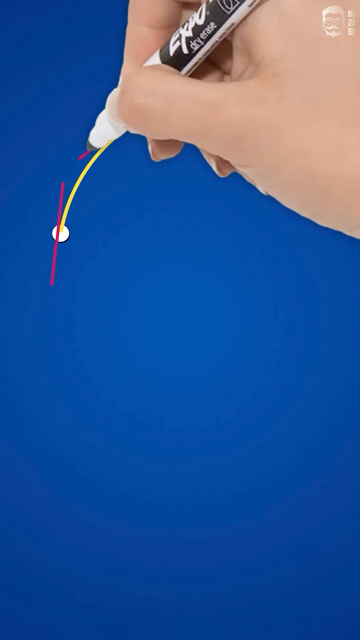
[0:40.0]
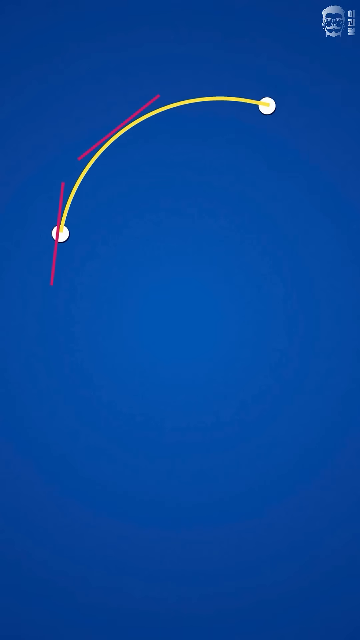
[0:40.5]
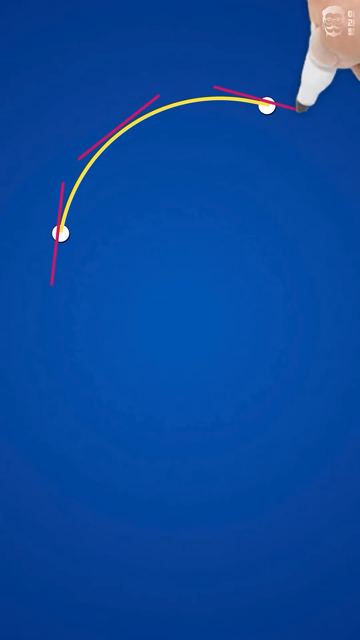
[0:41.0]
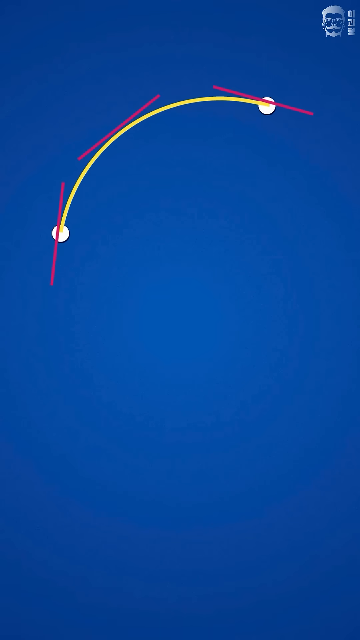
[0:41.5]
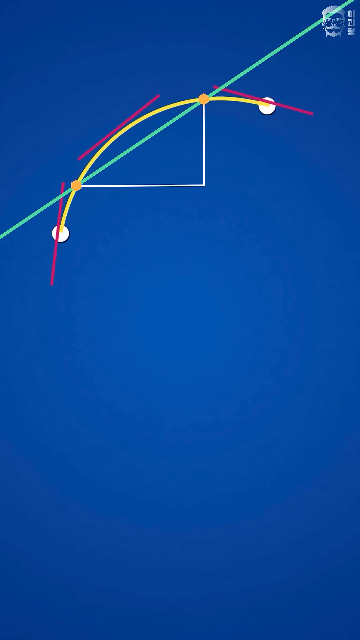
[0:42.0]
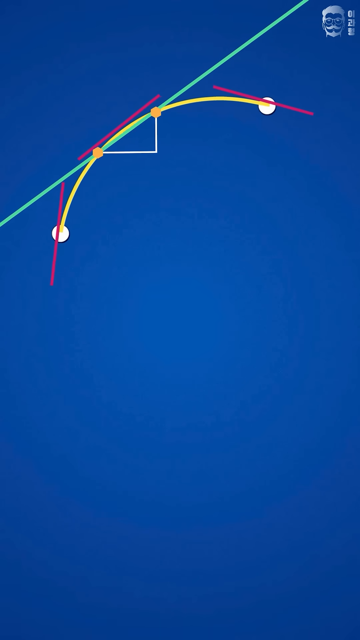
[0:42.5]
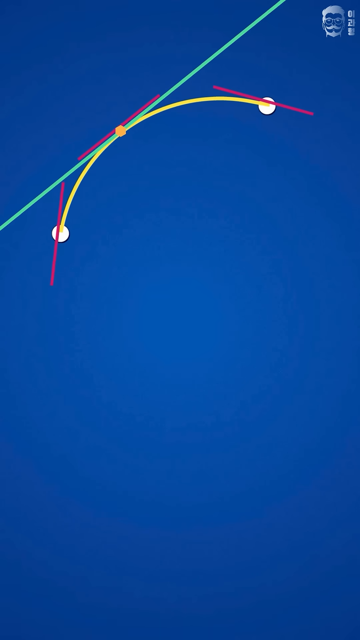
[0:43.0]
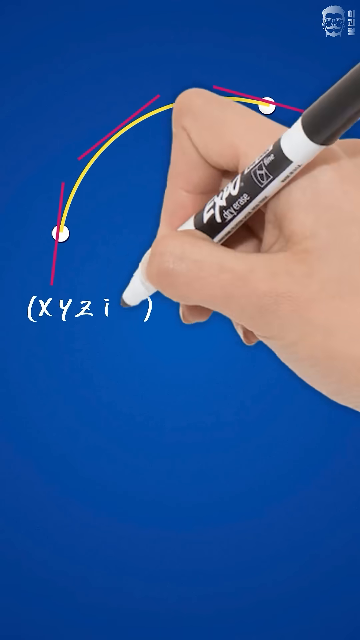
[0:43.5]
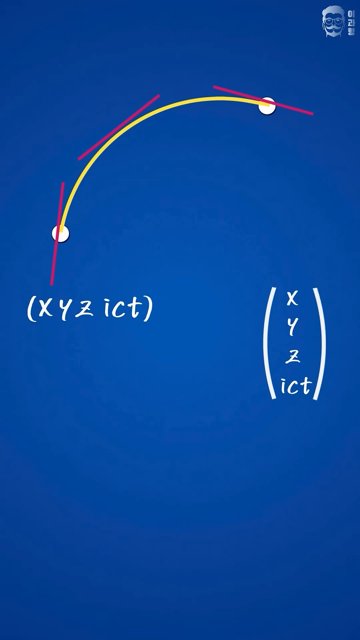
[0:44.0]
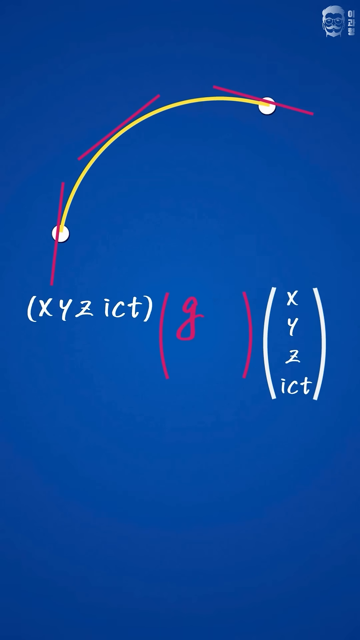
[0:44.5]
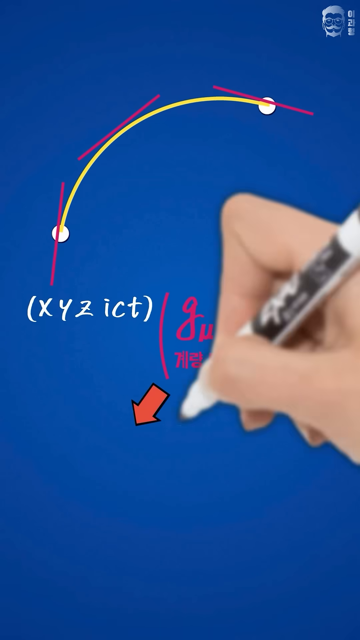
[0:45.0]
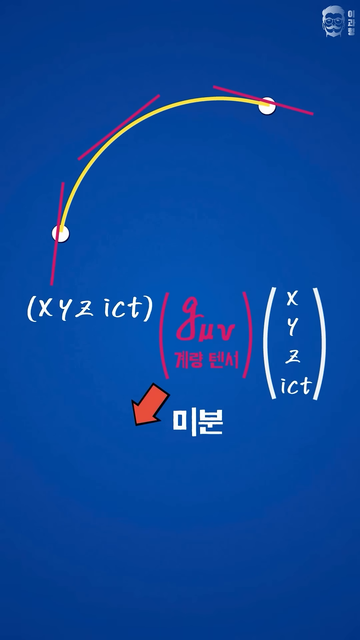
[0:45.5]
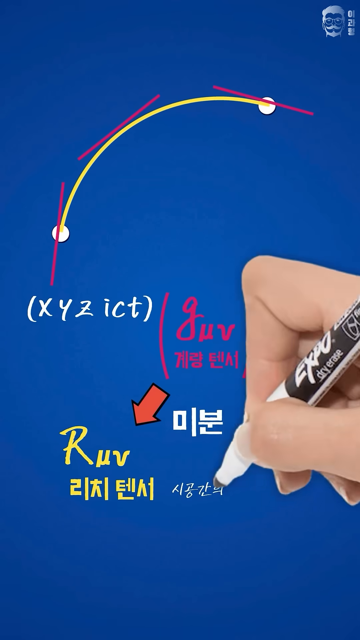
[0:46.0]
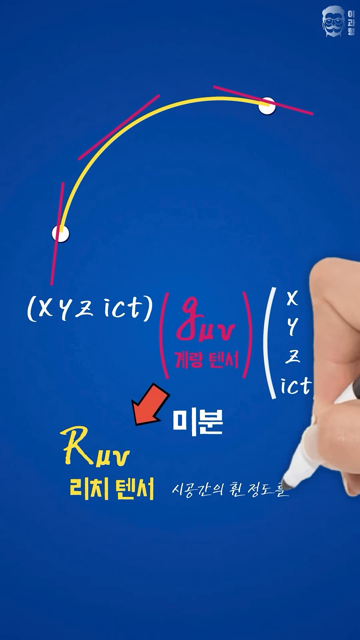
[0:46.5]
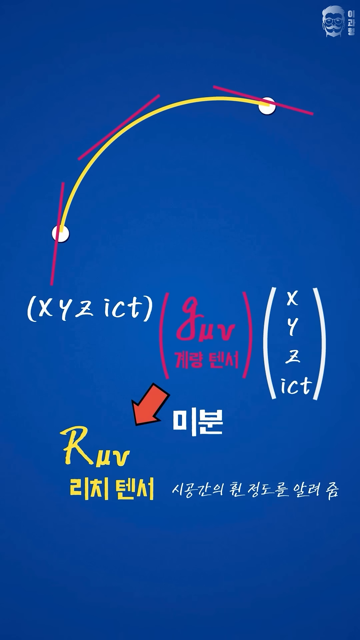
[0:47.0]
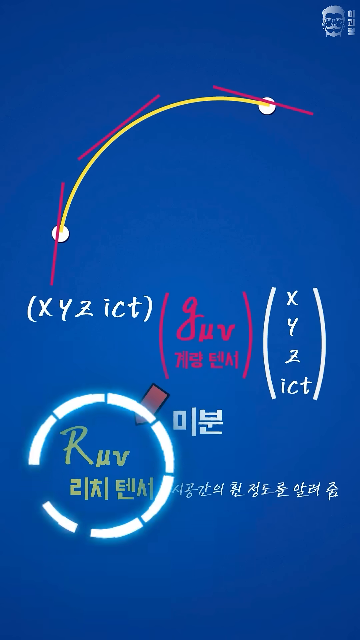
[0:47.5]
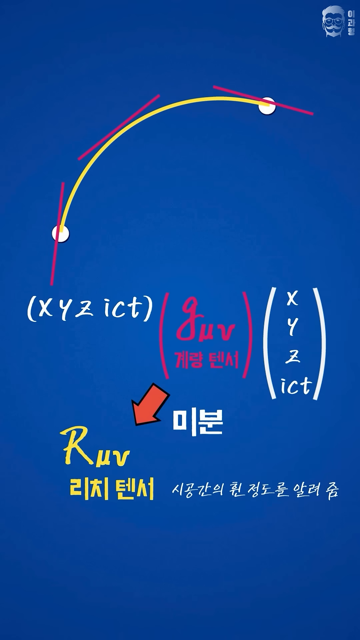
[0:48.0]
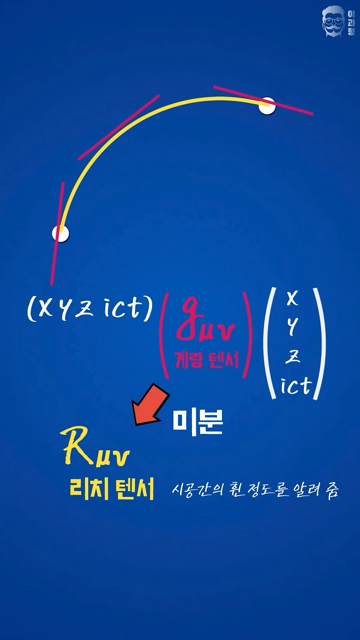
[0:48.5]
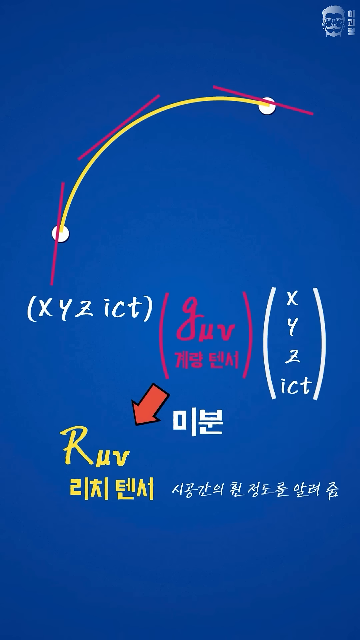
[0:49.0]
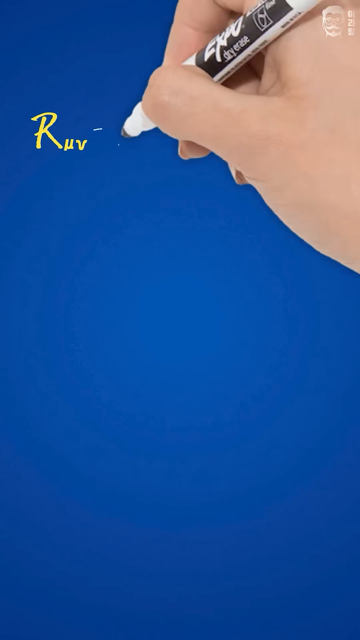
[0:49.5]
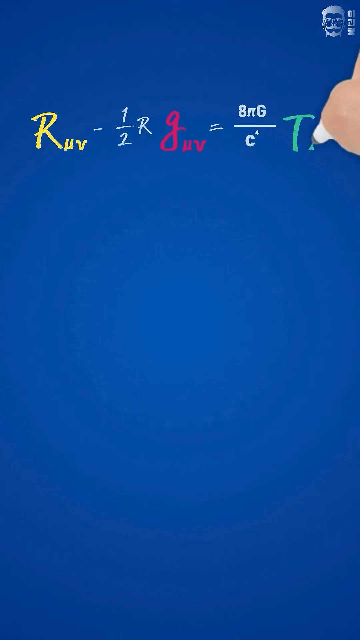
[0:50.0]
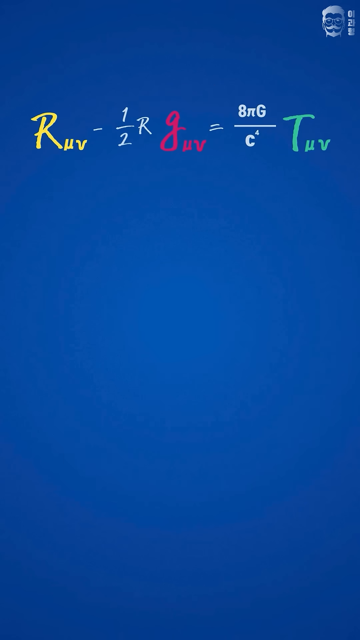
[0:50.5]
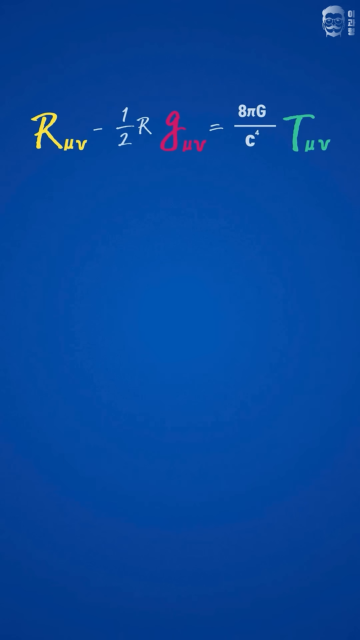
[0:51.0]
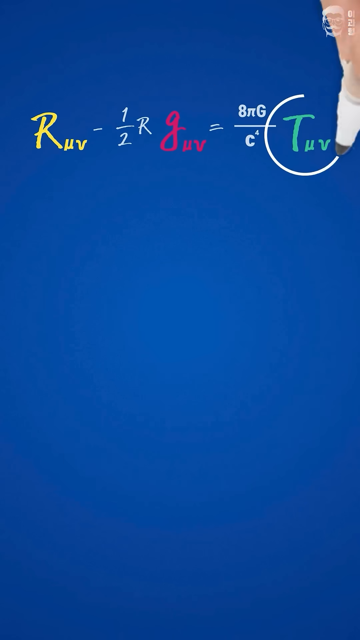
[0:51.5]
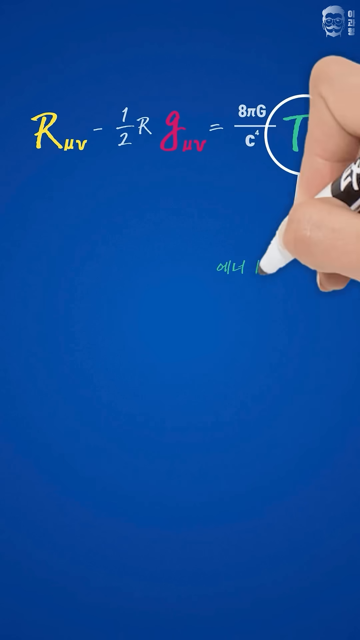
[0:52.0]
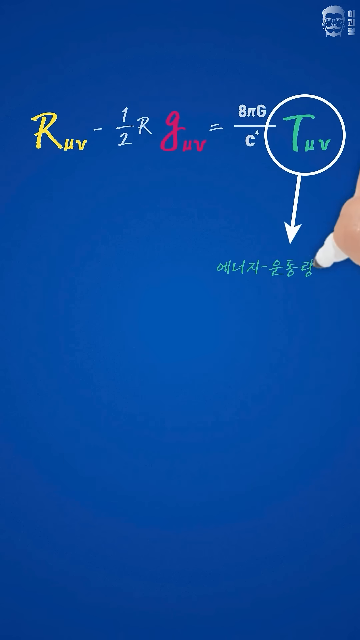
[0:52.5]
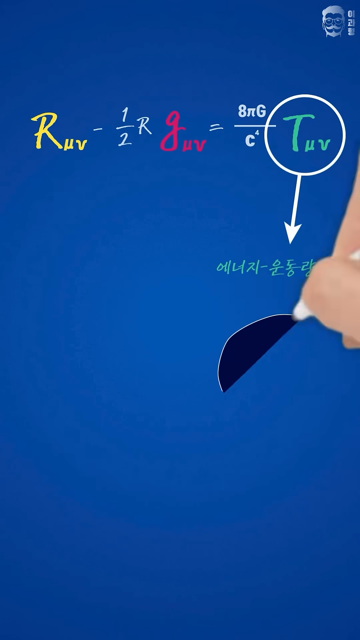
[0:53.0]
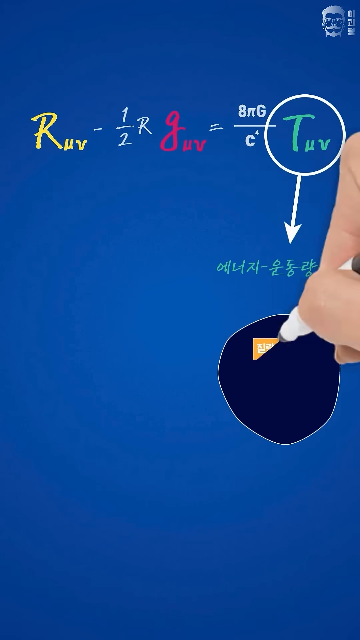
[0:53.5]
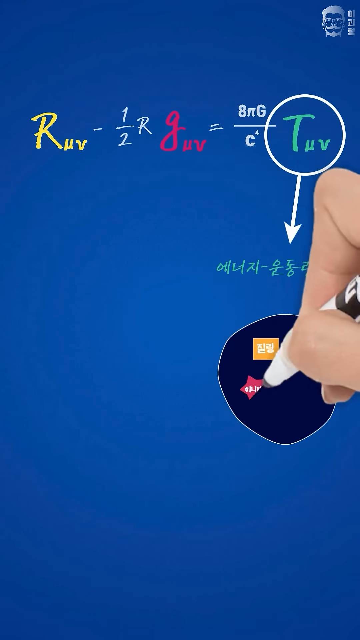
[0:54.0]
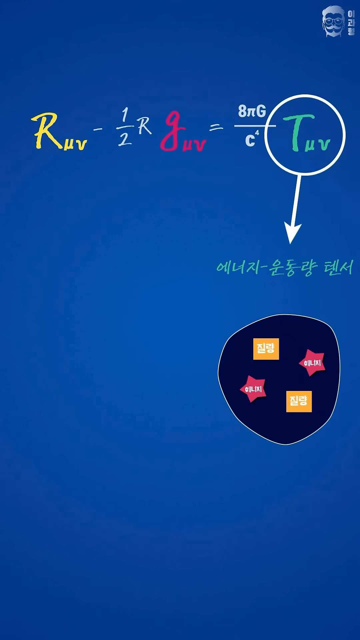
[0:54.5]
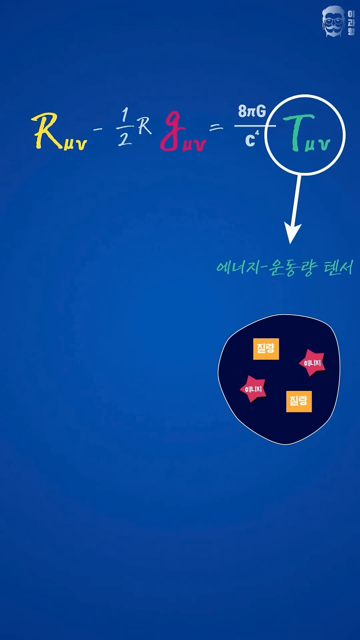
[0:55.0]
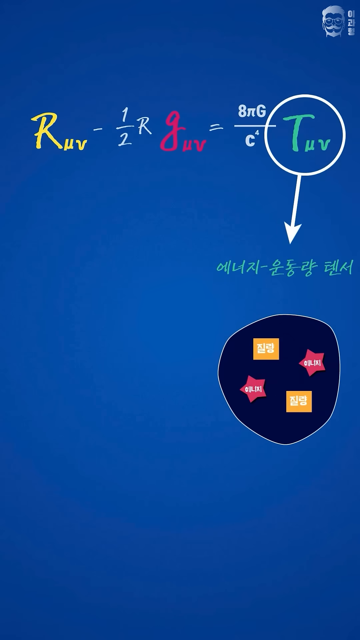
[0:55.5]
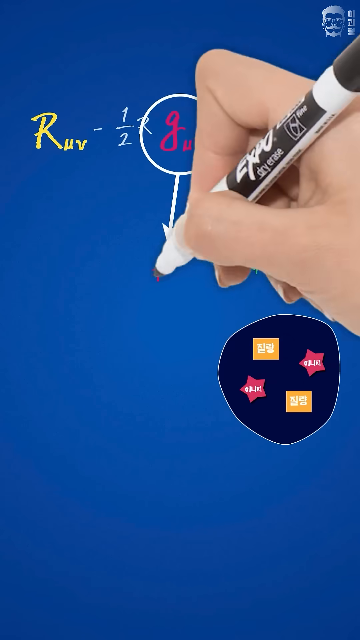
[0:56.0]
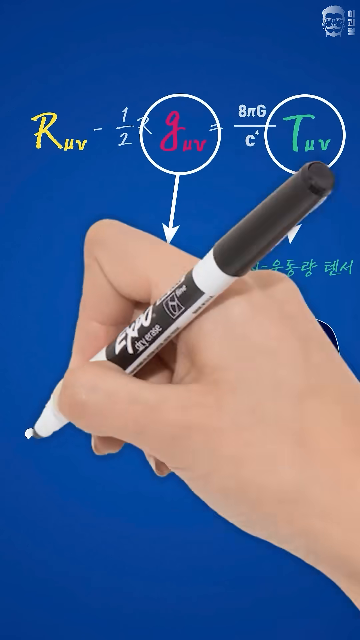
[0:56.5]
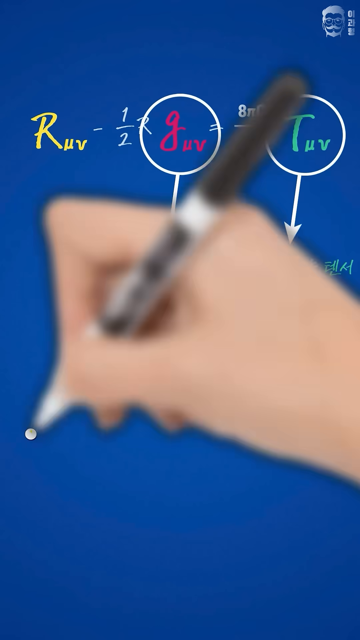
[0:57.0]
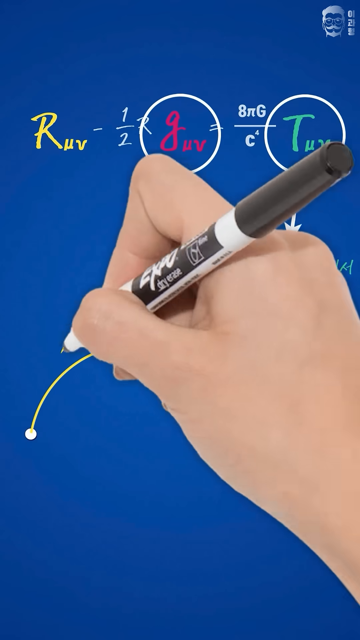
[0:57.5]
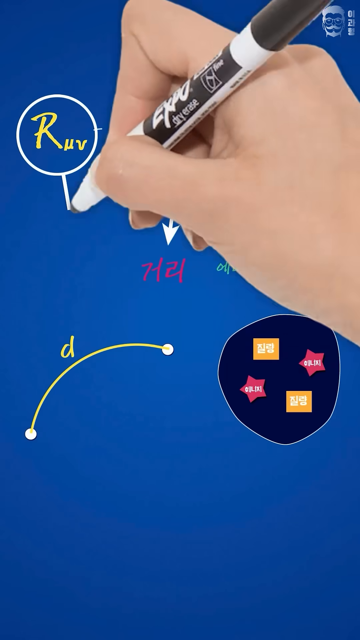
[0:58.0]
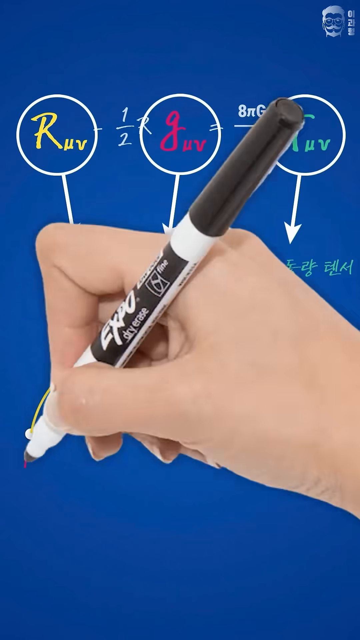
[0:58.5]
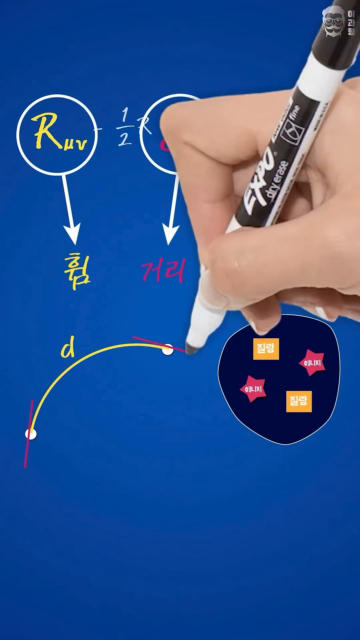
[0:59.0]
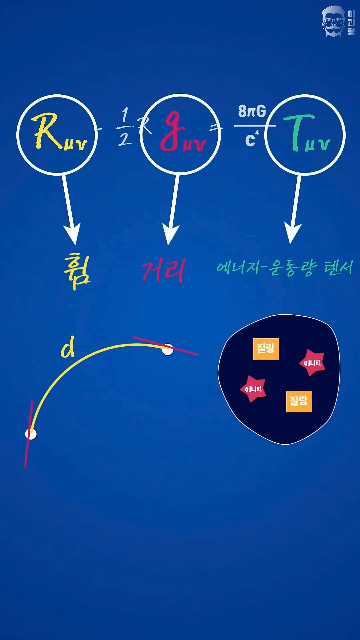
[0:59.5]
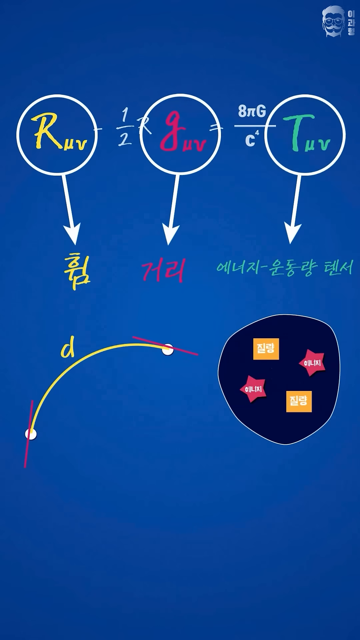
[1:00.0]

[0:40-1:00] The background is still deep blue, clear and clean. At the top, a curved yellow path connects two white dots; the path is no longer straight. Red lines at each point suggest movement or curvature. The coordinates listed at the bottom left say x, y, z and what appears to be I, C, T. In the center is the same red matrix structure, sandwiched between two coordinate vectors. Below that are a yellow line and a red arrow pointing to the next text, and yellow Korean text gives a short description of some sort. The video then zooms out to show a bigger equation. Three big circled terms, yellow, red and green, are drawn across the top, all connected by an equation. Below that, another curved yellow path connects two points. In the bottom right is a rough sketch of something with markings inside.